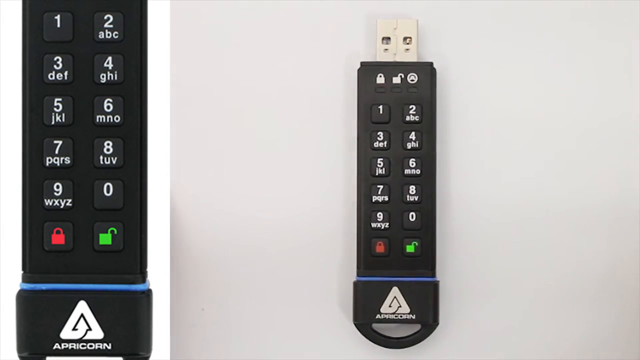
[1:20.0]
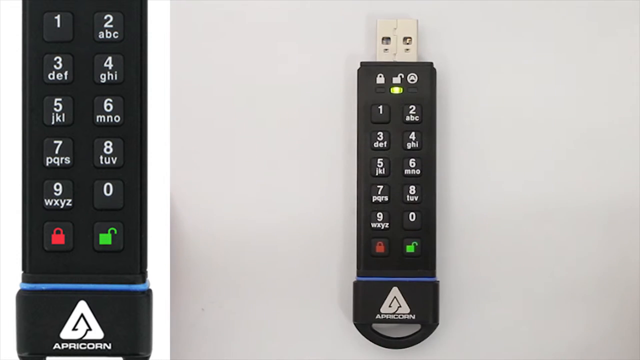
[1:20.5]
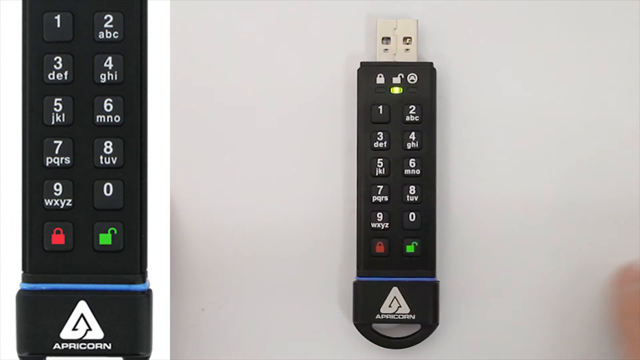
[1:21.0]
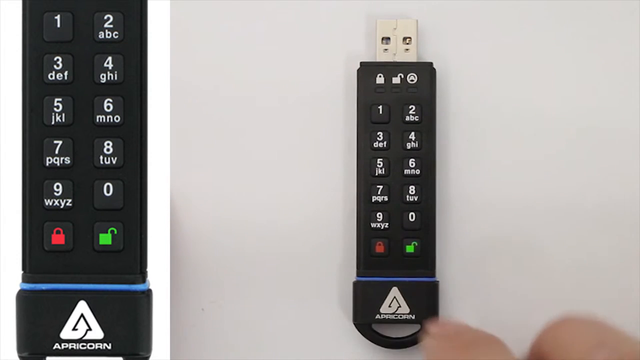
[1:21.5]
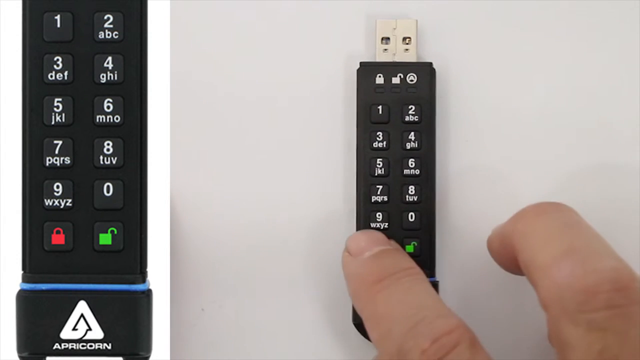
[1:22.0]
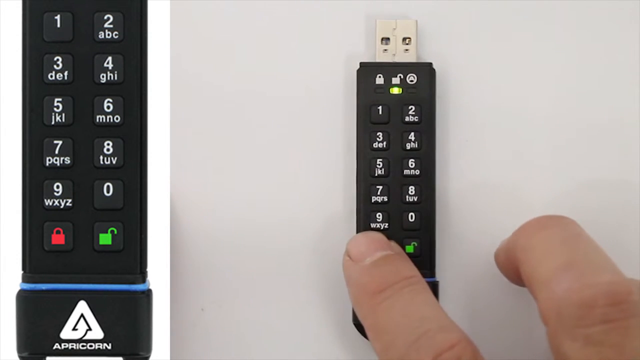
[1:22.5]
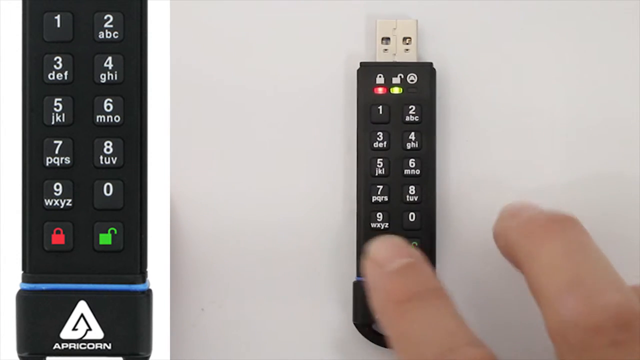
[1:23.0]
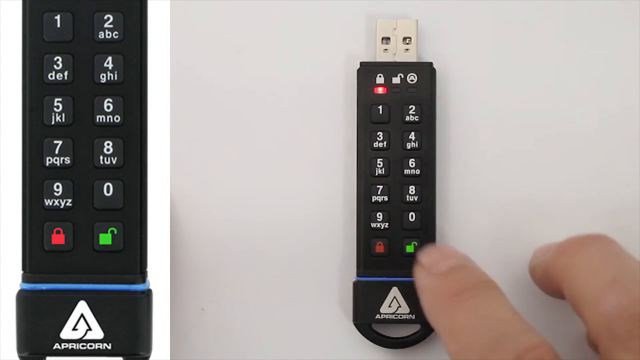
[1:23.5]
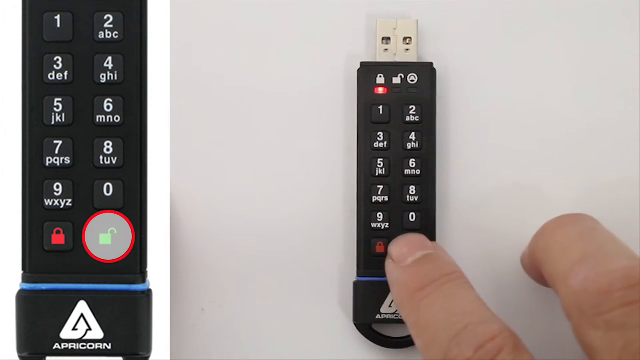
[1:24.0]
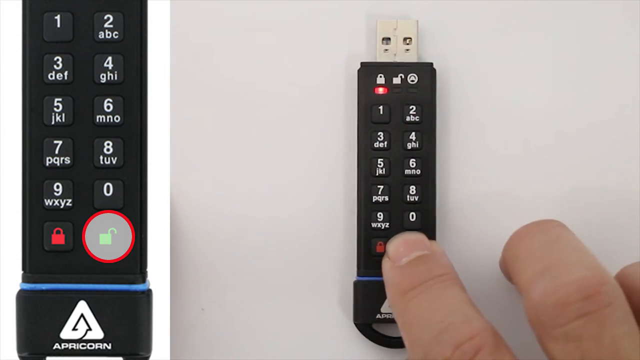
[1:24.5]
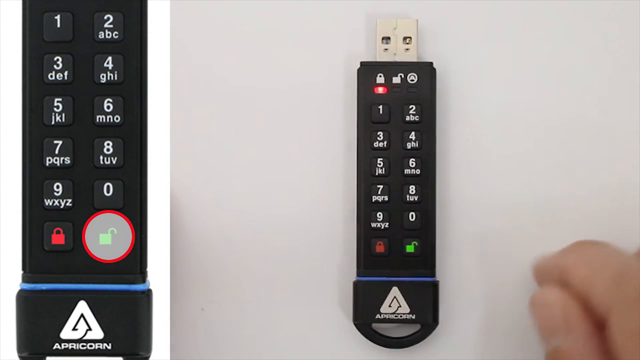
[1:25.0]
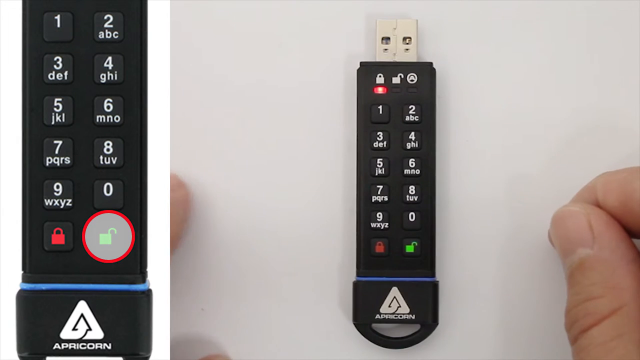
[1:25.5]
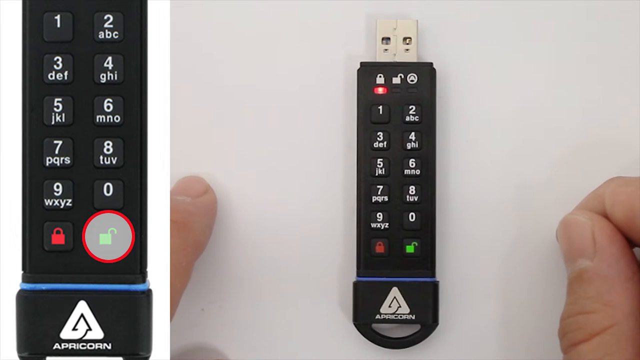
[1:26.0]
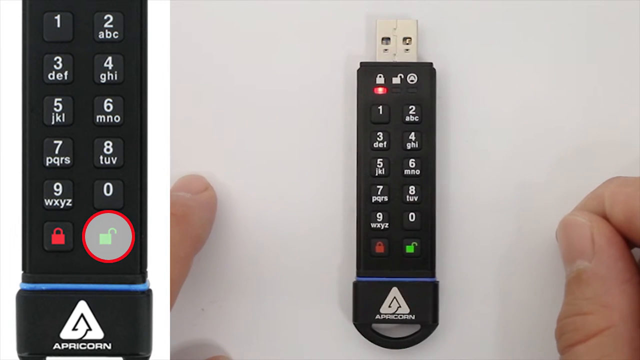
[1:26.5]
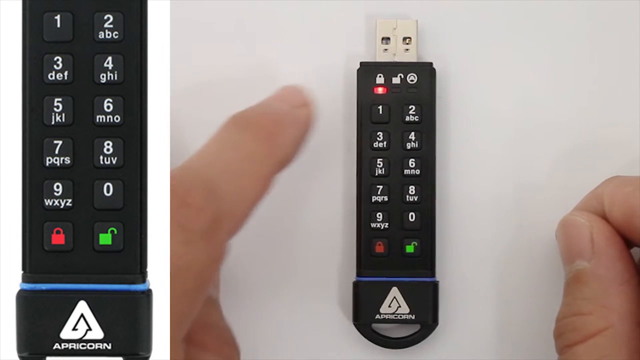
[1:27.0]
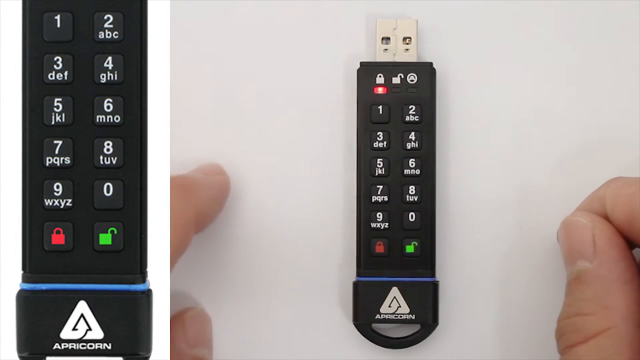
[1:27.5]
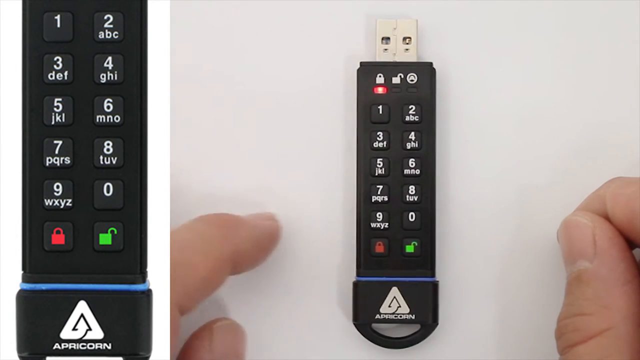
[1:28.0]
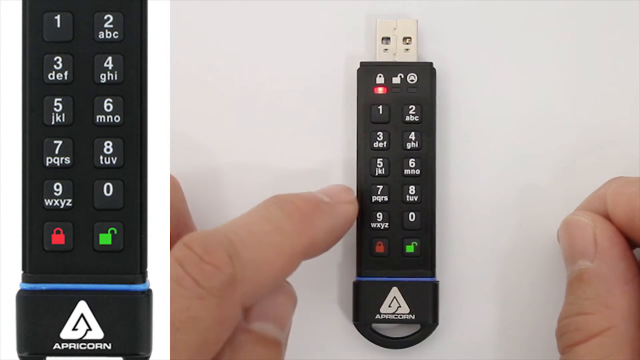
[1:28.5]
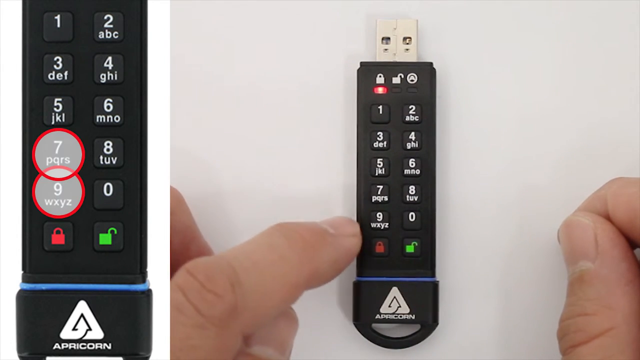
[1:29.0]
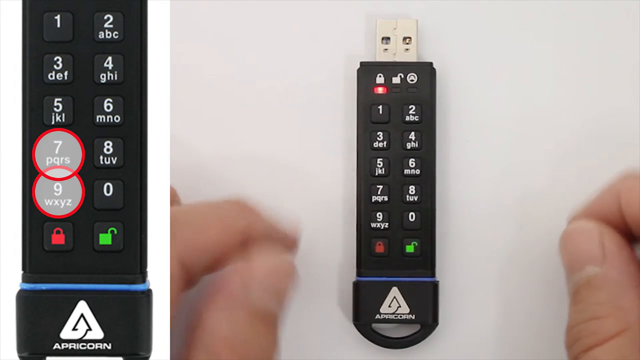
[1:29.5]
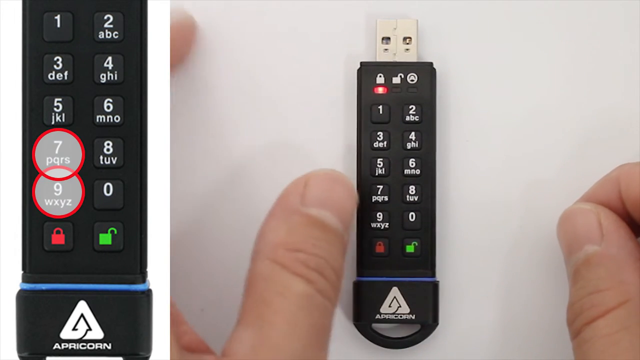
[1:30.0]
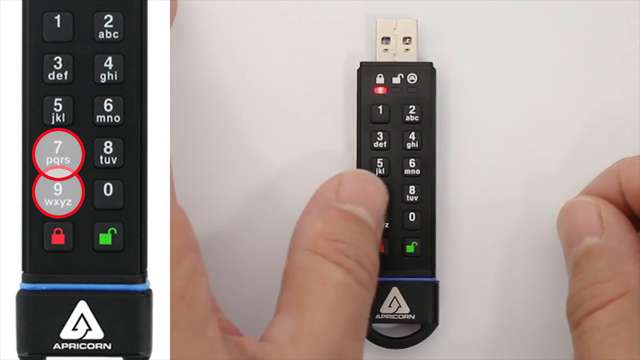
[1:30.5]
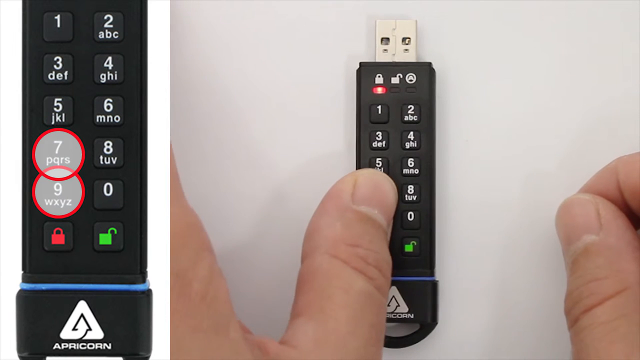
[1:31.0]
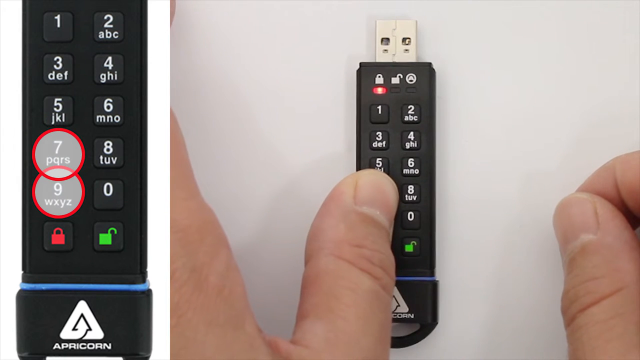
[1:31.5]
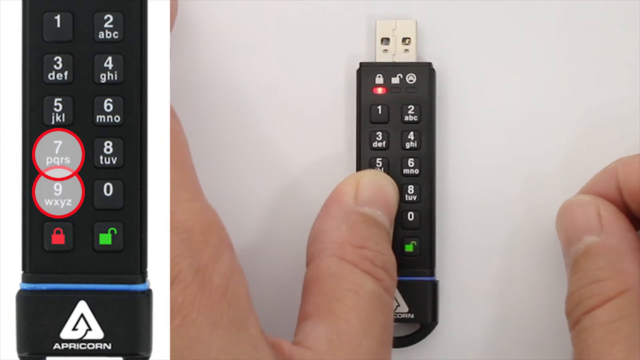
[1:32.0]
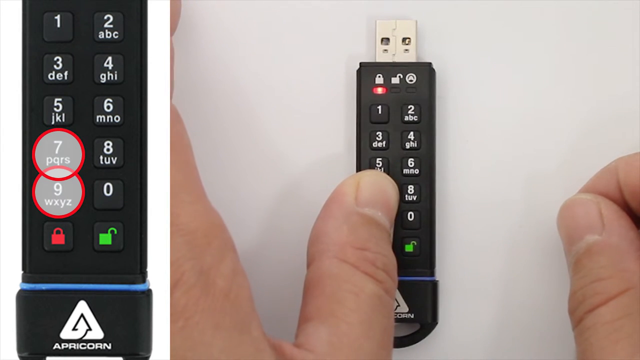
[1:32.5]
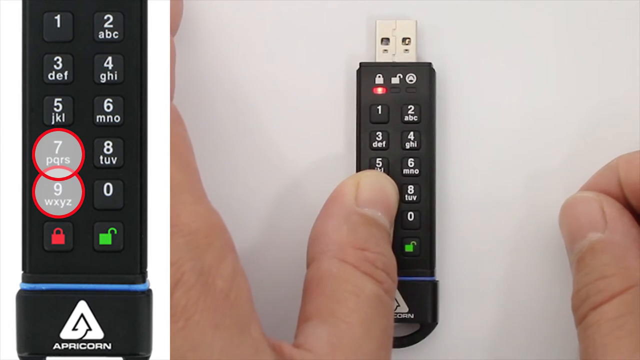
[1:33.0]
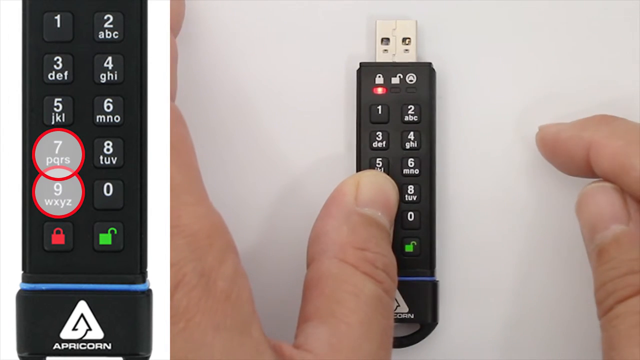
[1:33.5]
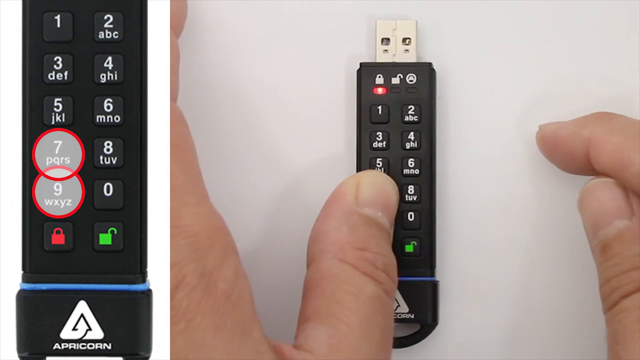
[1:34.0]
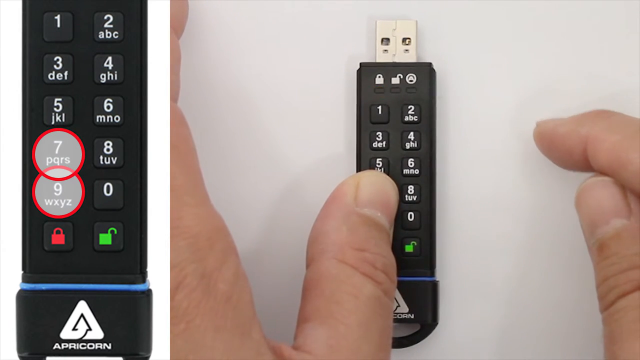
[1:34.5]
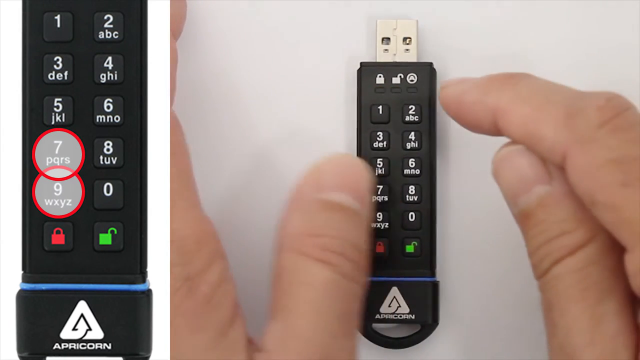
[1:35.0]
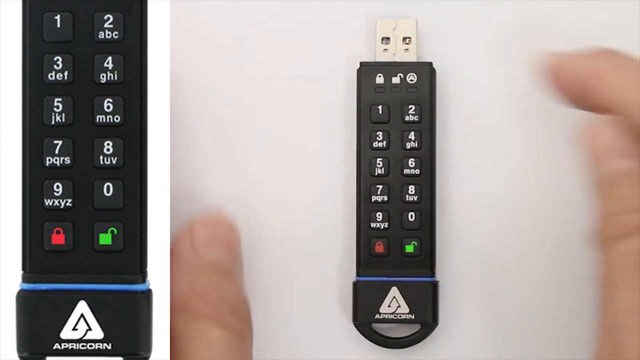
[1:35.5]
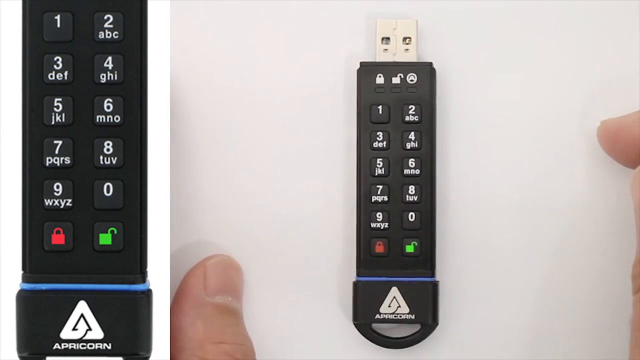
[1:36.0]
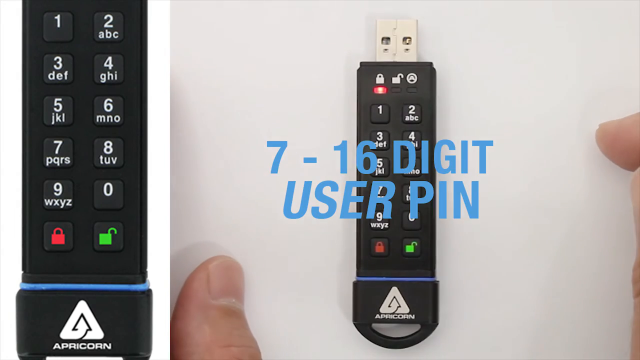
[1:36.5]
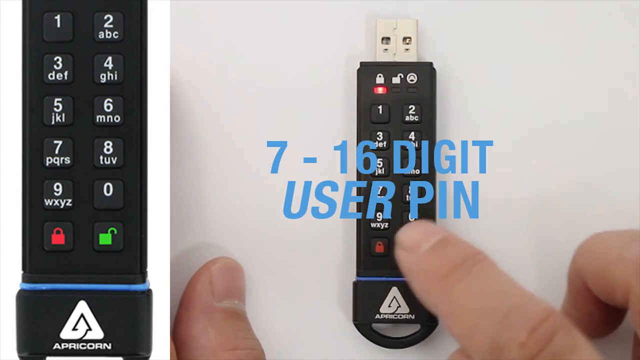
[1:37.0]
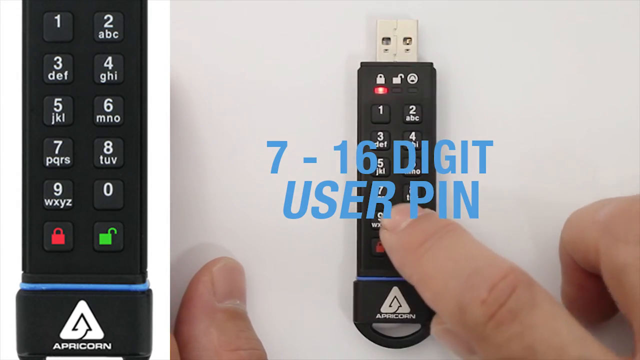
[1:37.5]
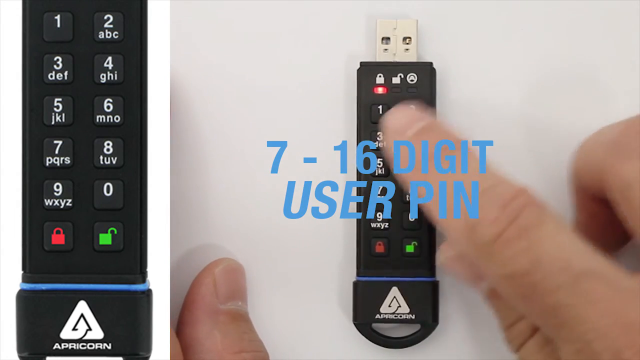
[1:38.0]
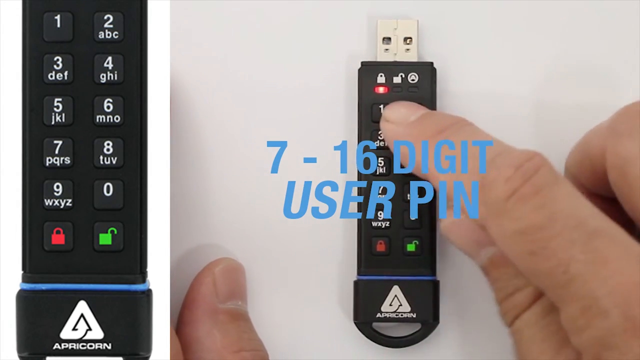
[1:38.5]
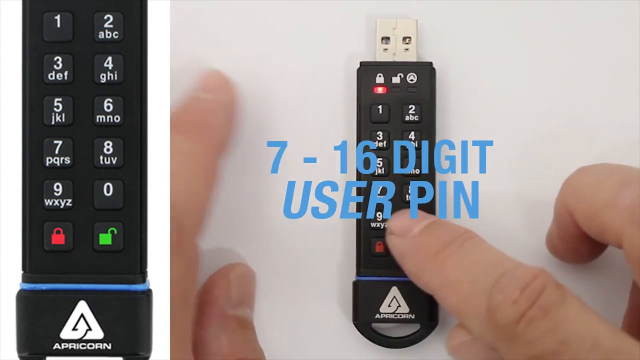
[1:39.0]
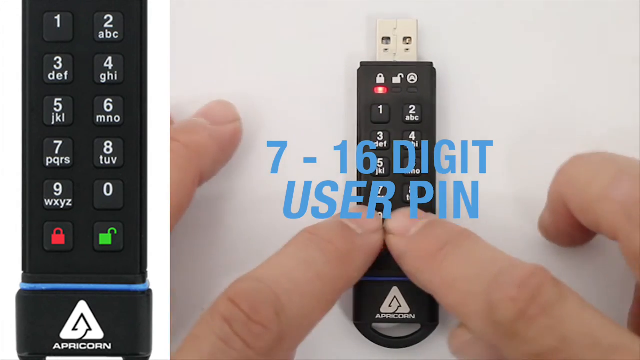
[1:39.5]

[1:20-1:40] The screen refers to a 7-to-16-digit user PIN needed to unlock the device. Keys 7 and 9 are pressed together, which activates the unlock, and then the 7-to-16-digit user PIN is entered to give access to the drive.